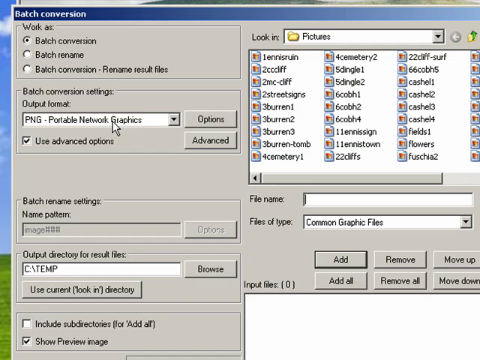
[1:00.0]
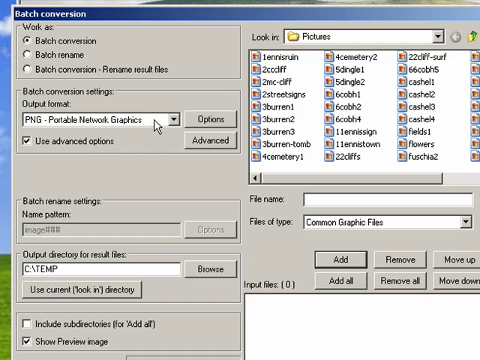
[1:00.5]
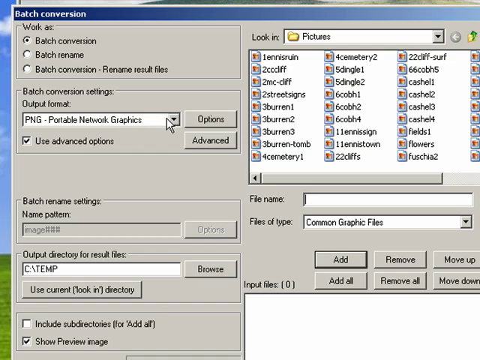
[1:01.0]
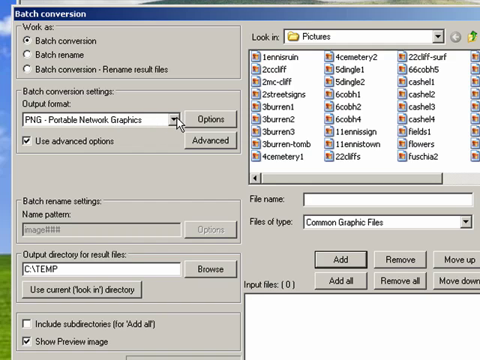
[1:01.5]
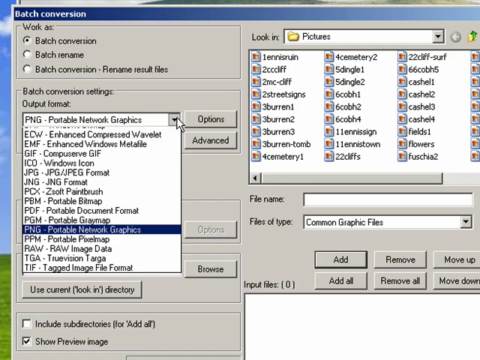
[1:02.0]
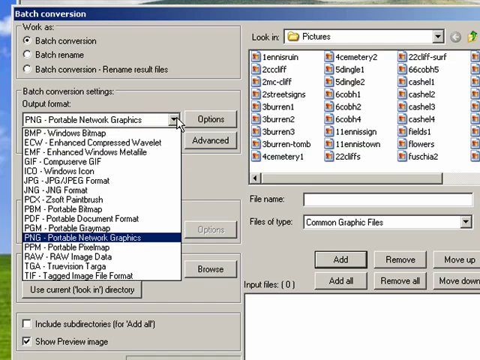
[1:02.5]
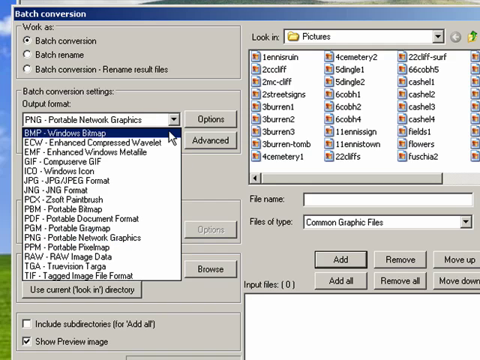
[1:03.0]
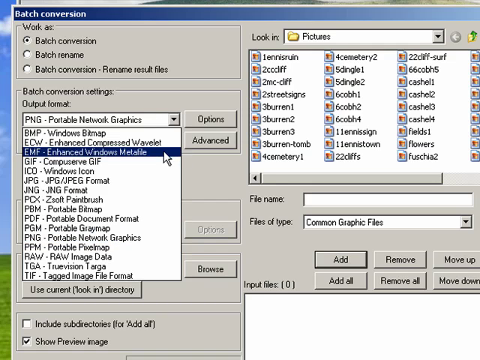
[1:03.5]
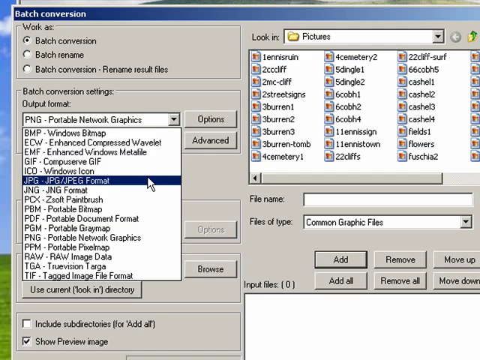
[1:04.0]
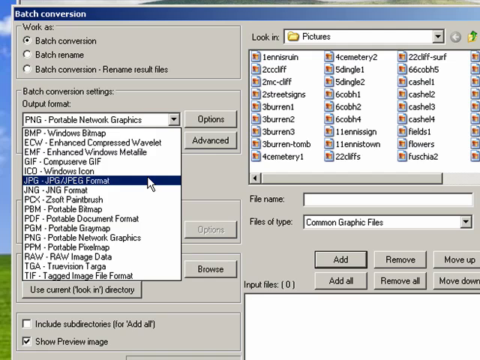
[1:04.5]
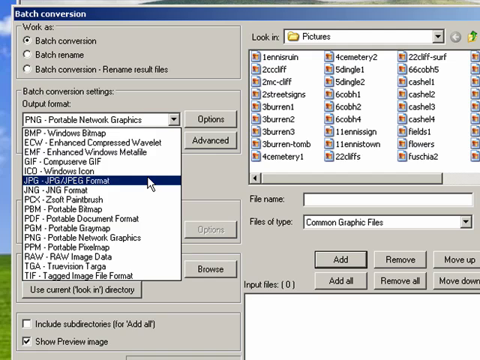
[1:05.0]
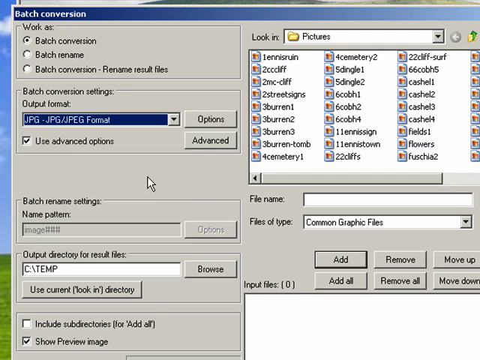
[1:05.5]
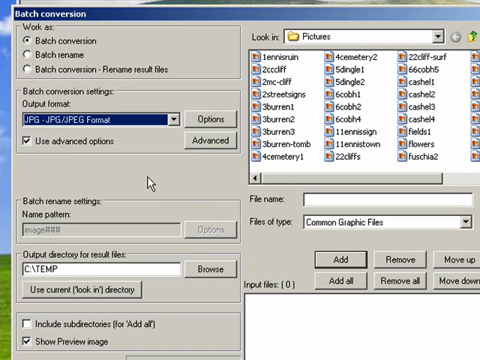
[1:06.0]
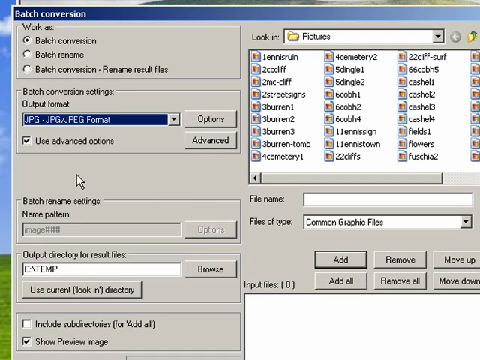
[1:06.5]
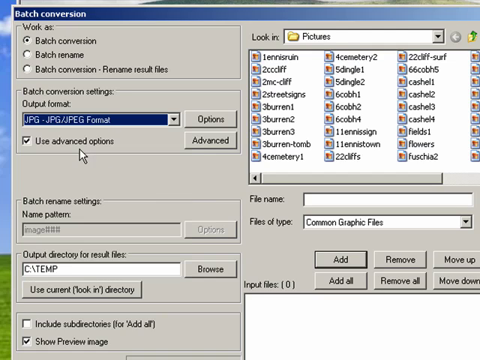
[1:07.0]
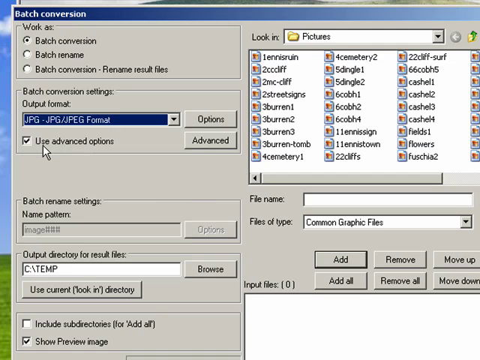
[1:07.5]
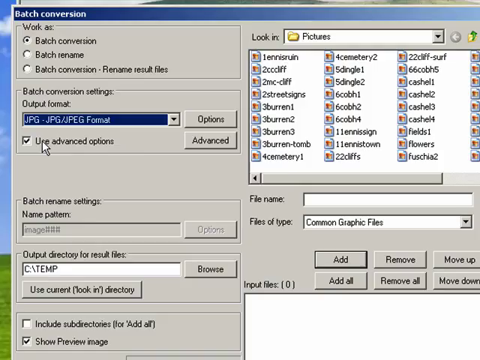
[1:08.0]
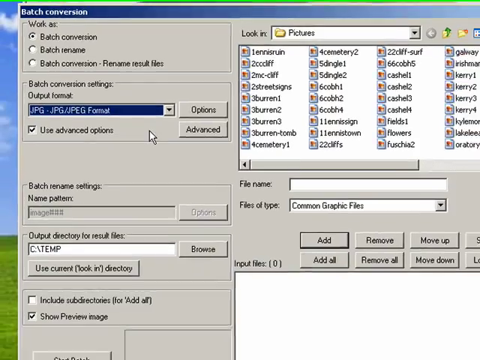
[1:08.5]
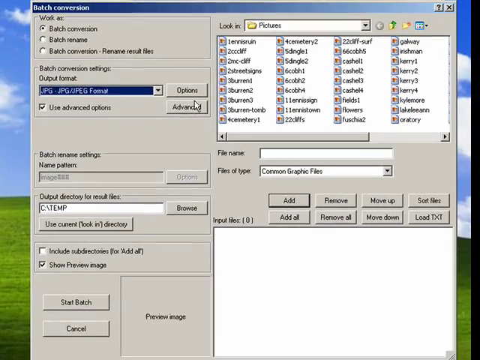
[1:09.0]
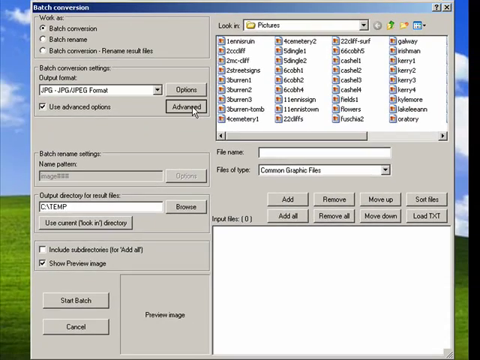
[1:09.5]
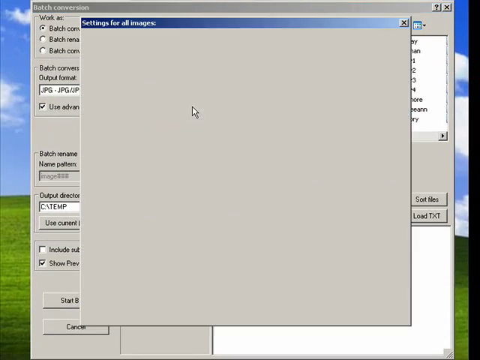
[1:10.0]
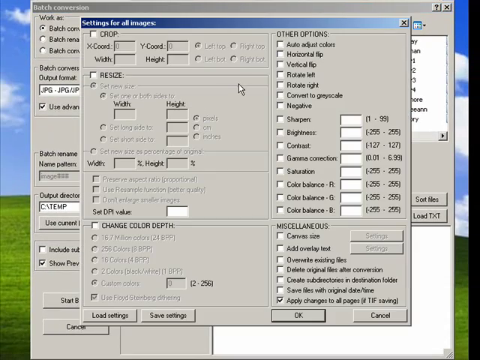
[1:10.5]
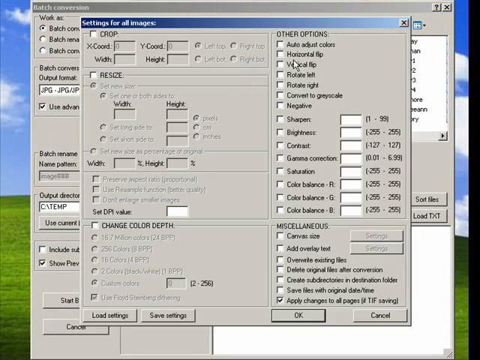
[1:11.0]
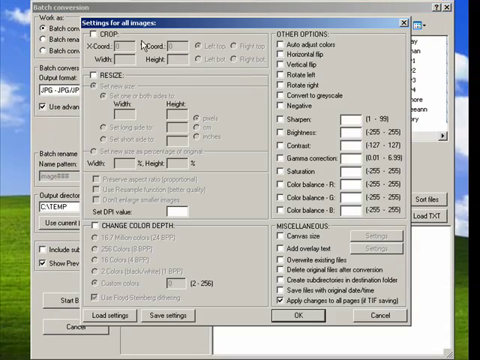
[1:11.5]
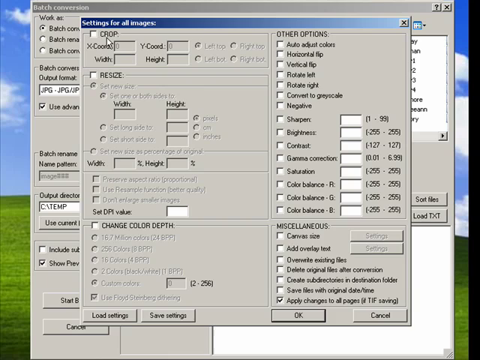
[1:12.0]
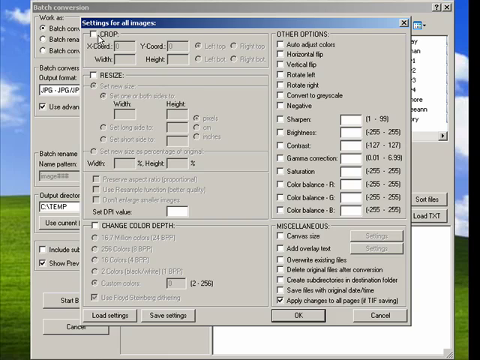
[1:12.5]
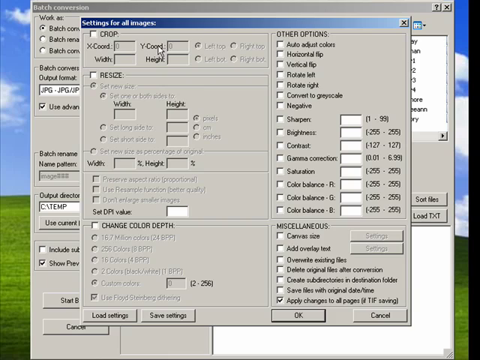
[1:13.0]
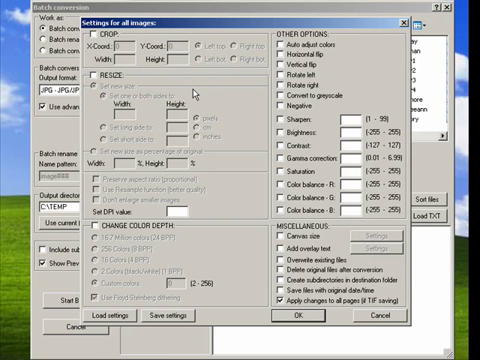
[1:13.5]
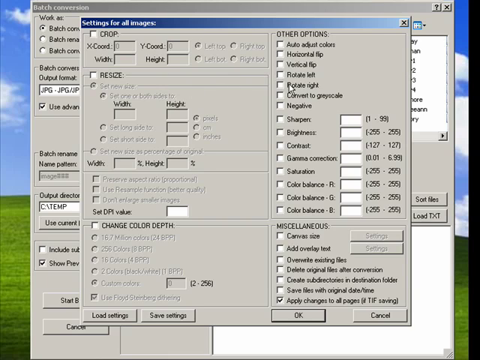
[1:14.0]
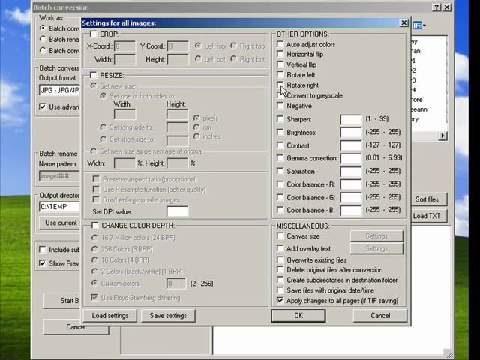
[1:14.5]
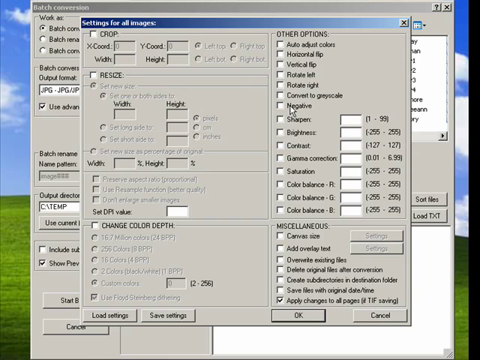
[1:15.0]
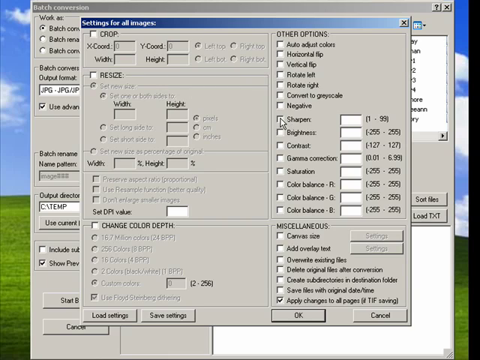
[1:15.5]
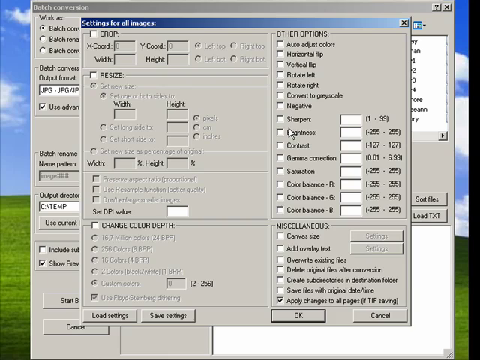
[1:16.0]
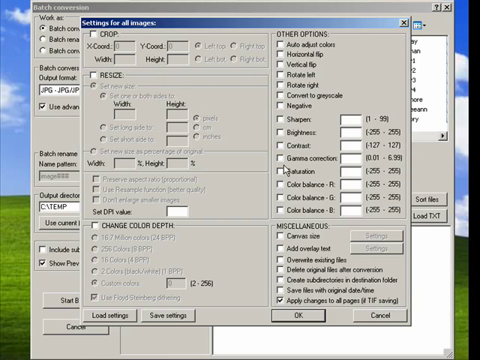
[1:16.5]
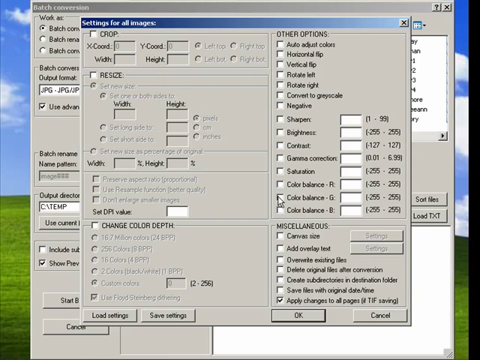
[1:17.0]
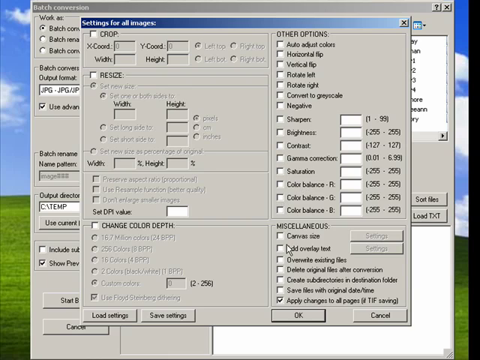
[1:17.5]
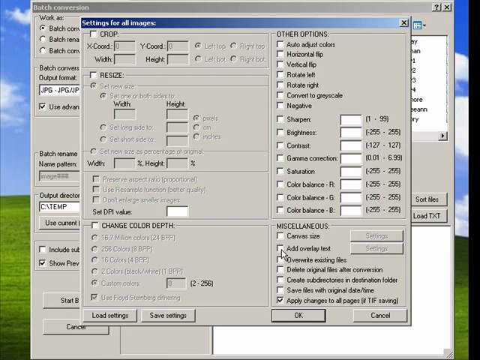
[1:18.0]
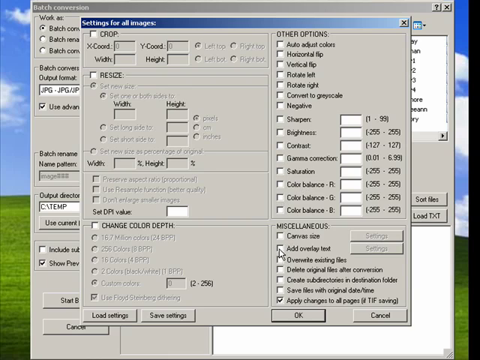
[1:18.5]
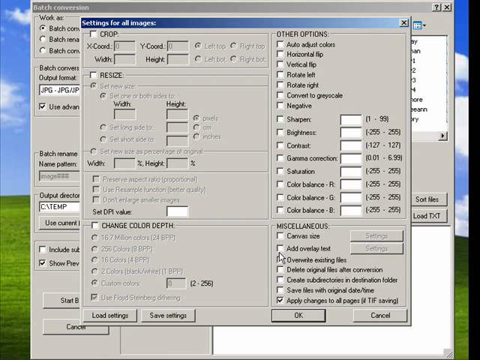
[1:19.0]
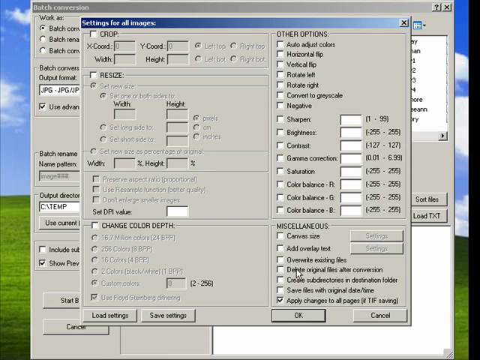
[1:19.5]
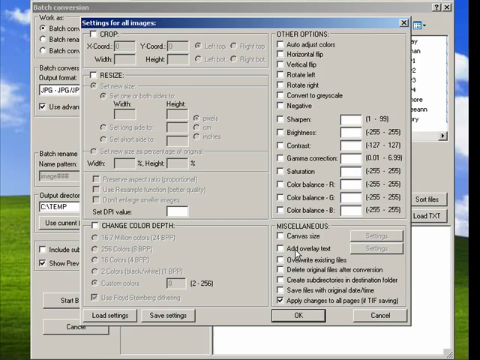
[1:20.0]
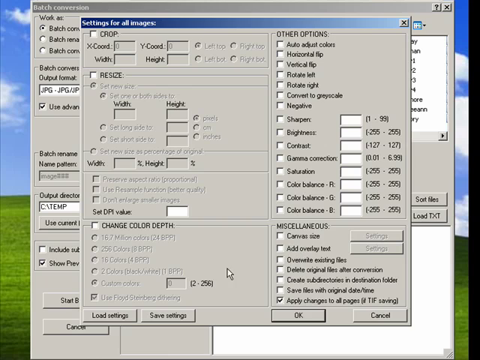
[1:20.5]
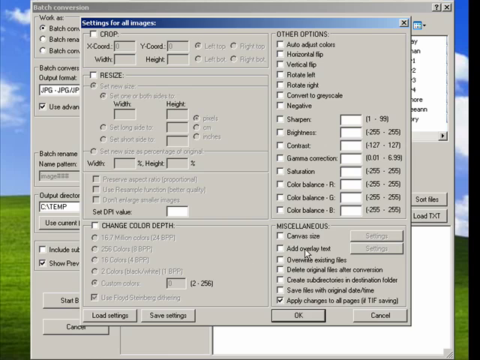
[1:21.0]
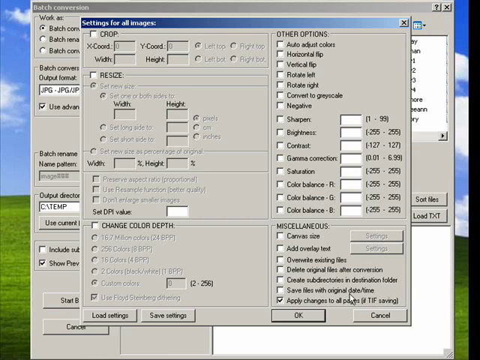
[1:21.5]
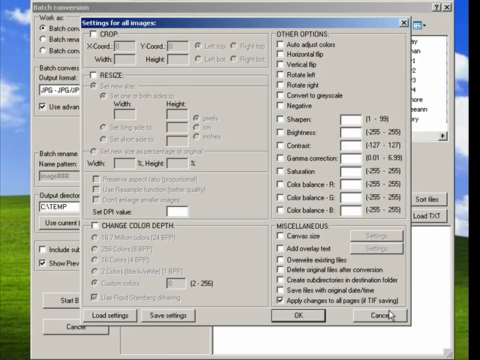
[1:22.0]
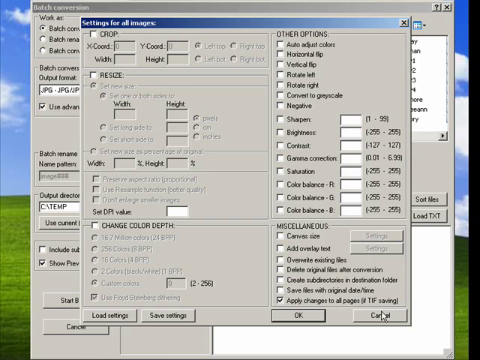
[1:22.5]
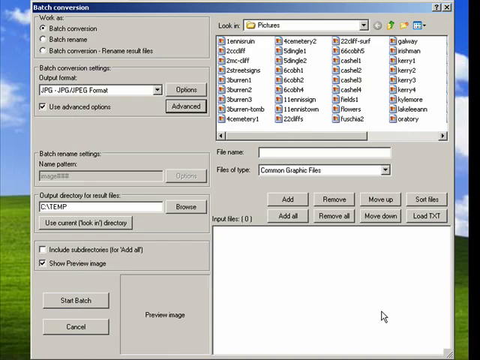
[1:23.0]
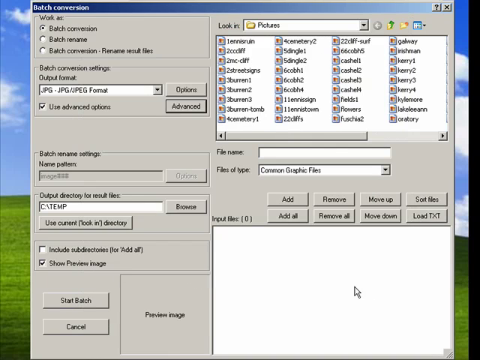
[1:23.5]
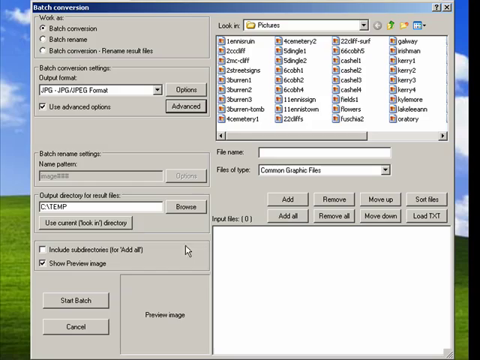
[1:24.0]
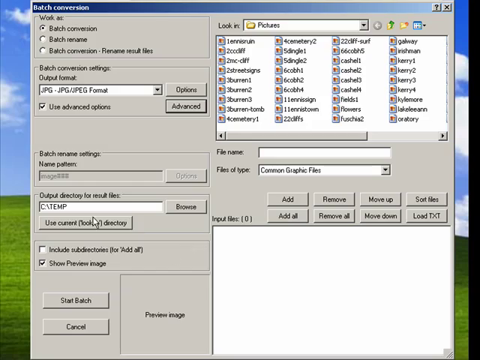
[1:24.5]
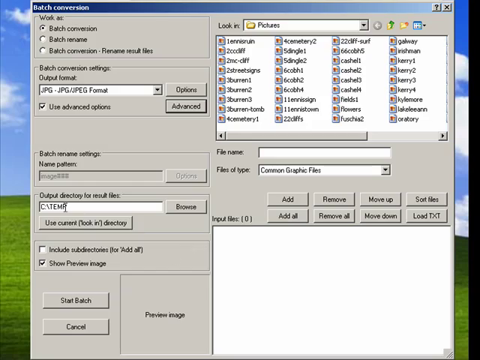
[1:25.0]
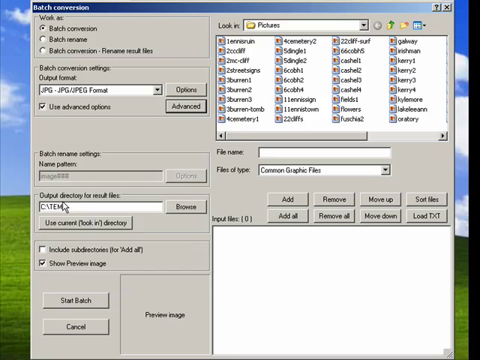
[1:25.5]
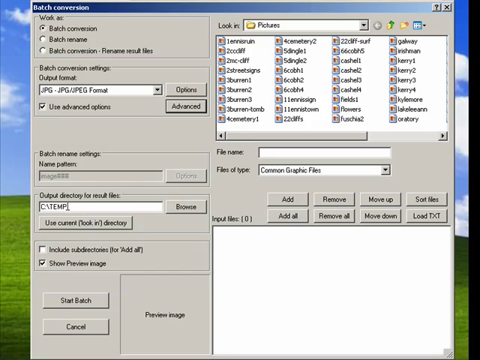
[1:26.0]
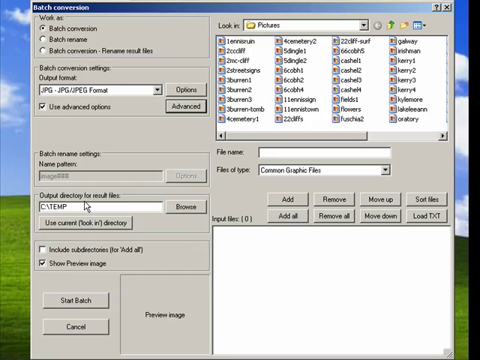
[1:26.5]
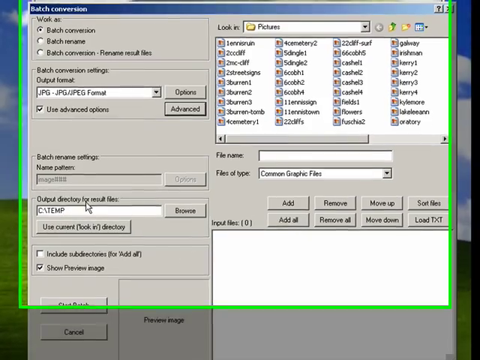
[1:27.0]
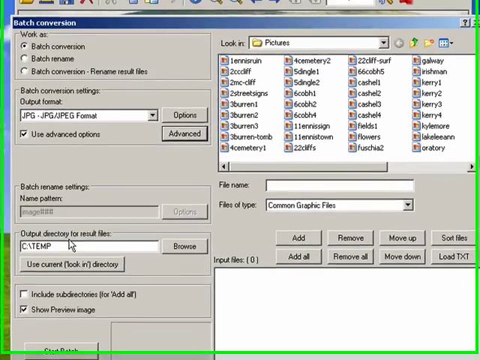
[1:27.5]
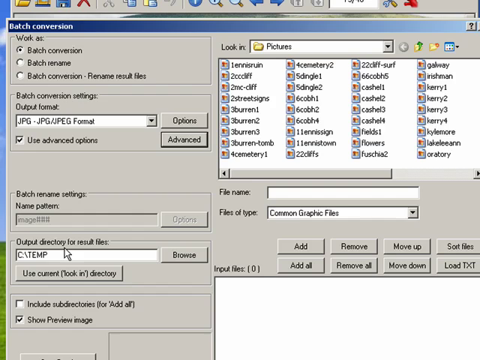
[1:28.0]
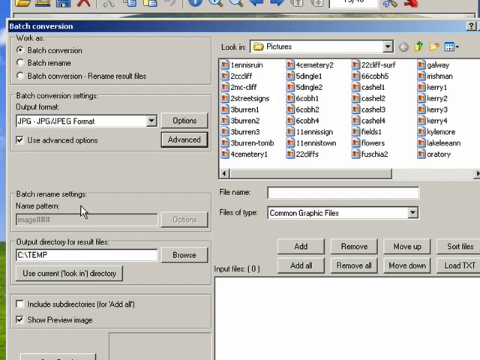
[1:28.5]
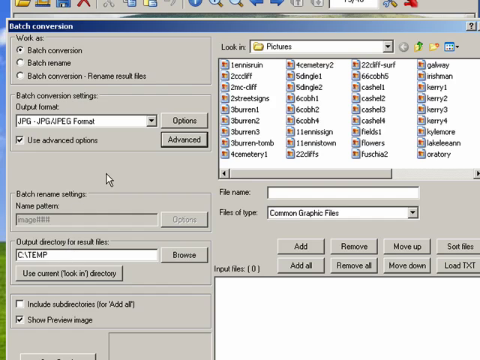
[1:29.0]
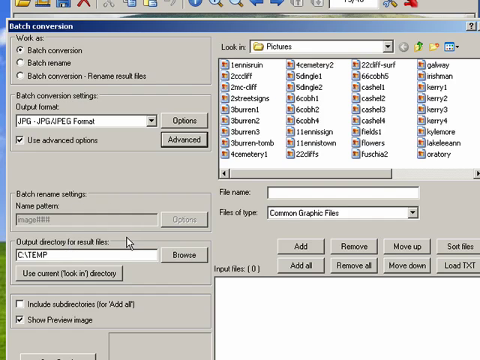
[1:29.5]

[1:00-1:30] A page headed "Batch conversion" is shown, and a cursor moves around and clicks on an arrow next to a text box that reads "PNG Portable Network Graphics." A dropdown menu appears, and the cursor clicks on and highlights the option "JPEG-JPEG/JPEG format." It then clicks the Advanced button, and a new page headed "Settings for All Images" appears. After moving around the page and hovering over several buttons, the cursor clicks Cancel. That page disappears and the Batch conversion page returns. On it, files are listed within a box showing the documents in the Pictures folder. The cursor continues to move around the page, hovering over a few different spots.